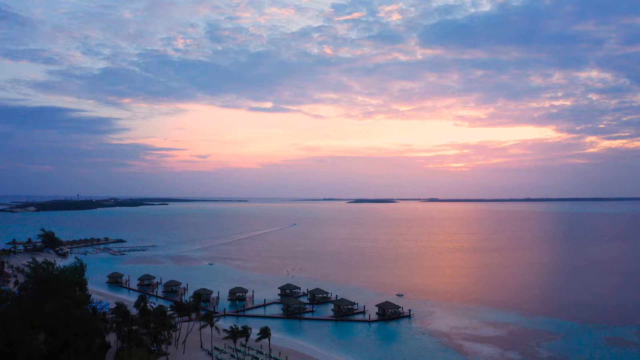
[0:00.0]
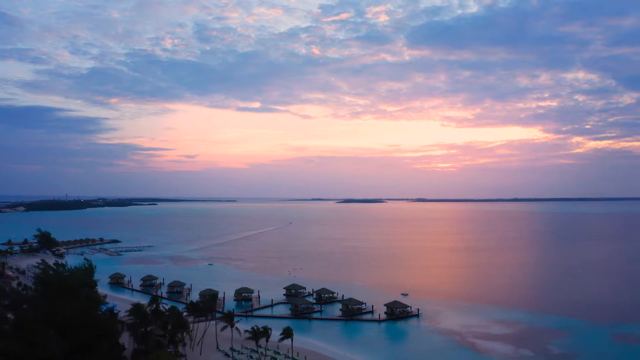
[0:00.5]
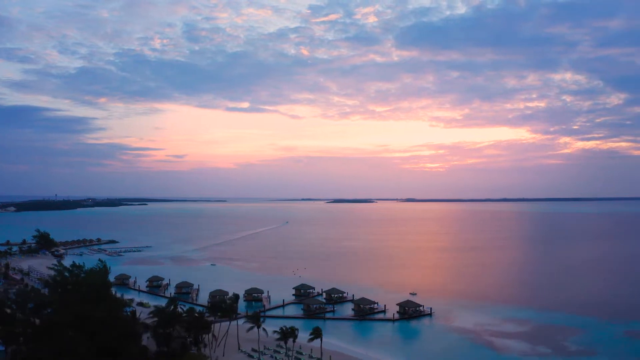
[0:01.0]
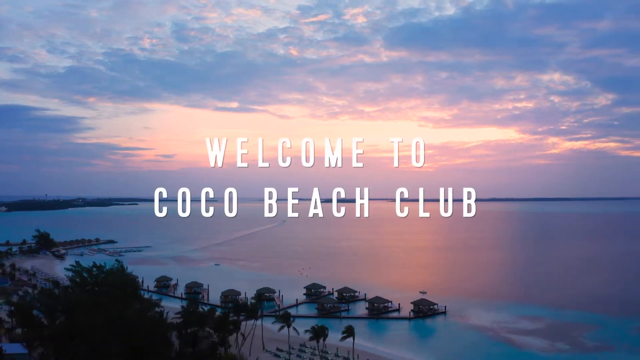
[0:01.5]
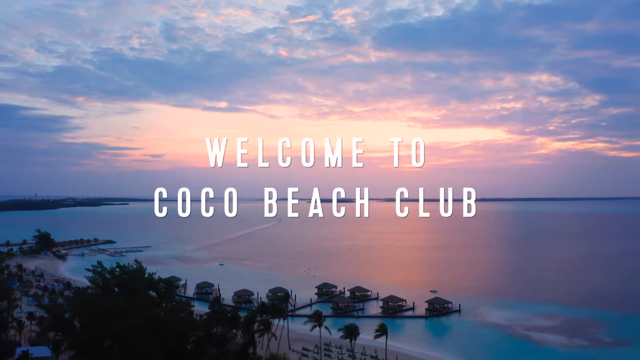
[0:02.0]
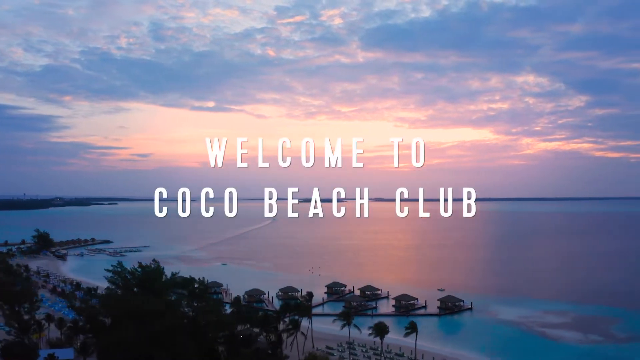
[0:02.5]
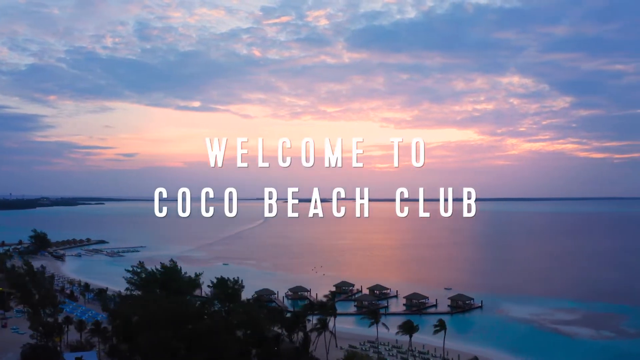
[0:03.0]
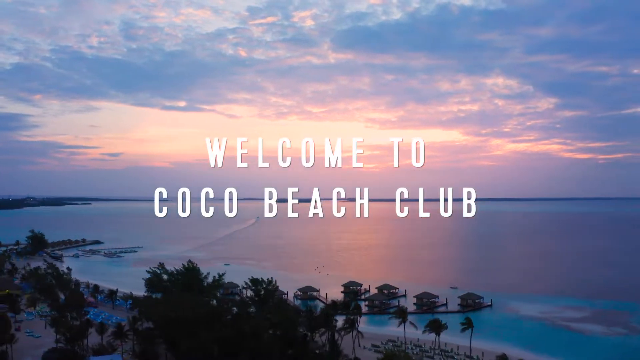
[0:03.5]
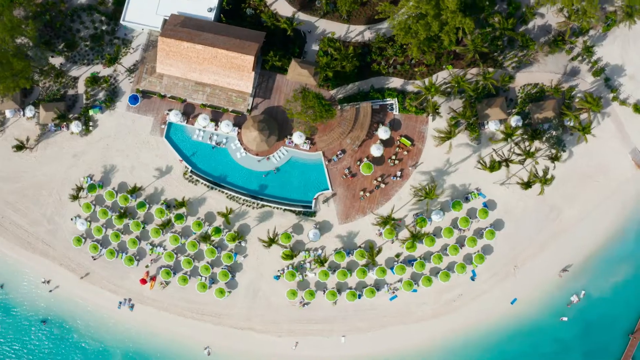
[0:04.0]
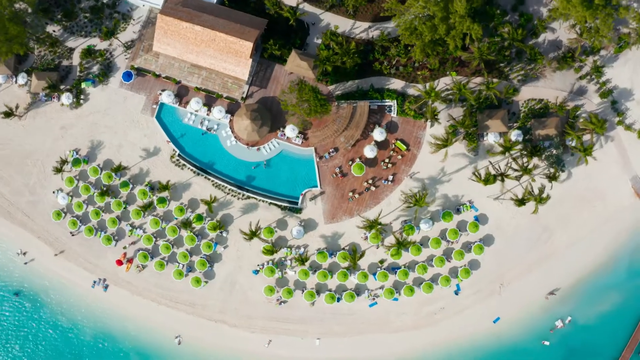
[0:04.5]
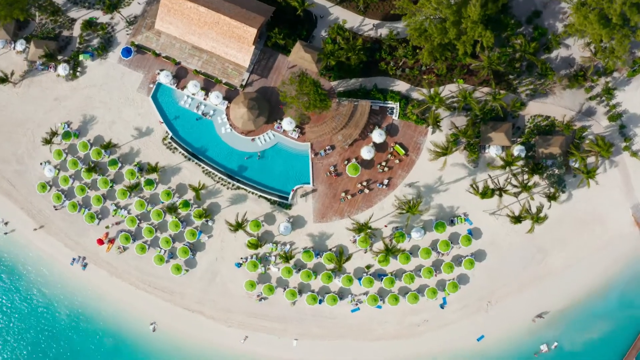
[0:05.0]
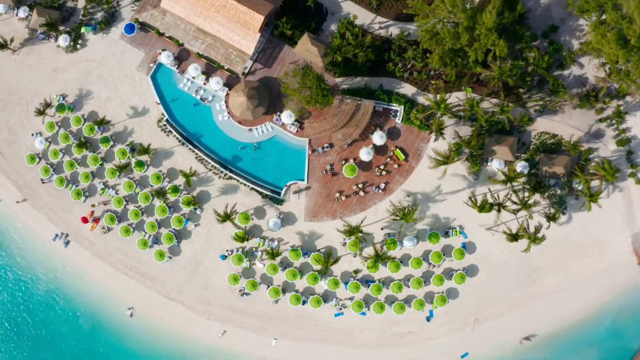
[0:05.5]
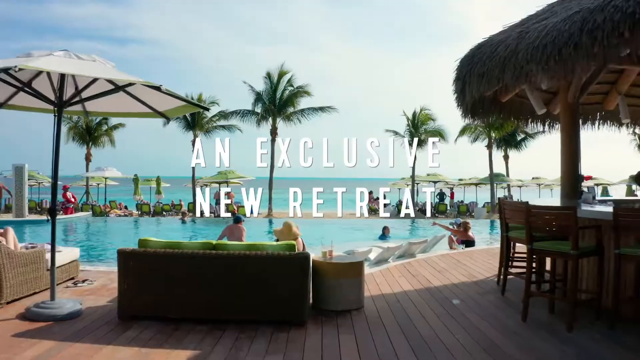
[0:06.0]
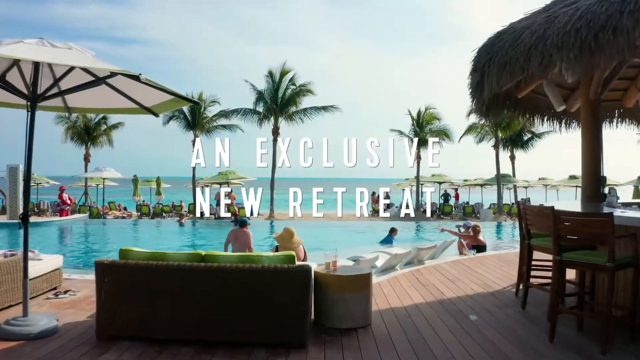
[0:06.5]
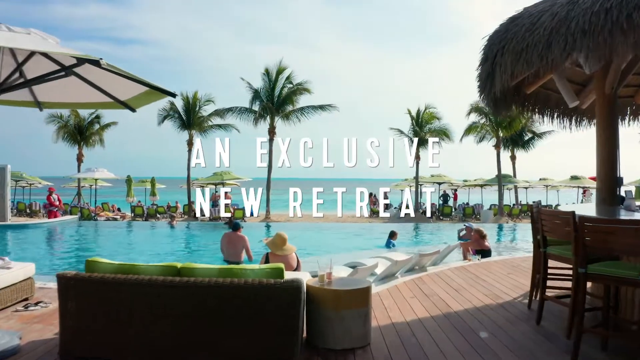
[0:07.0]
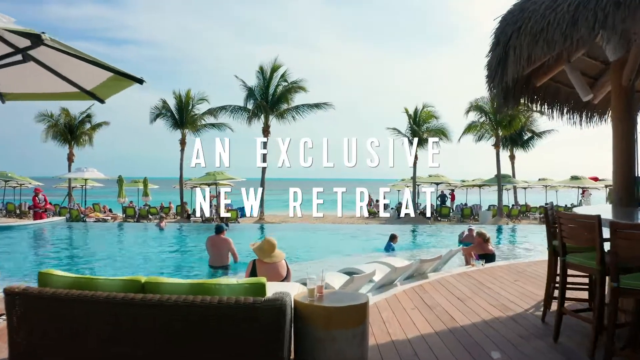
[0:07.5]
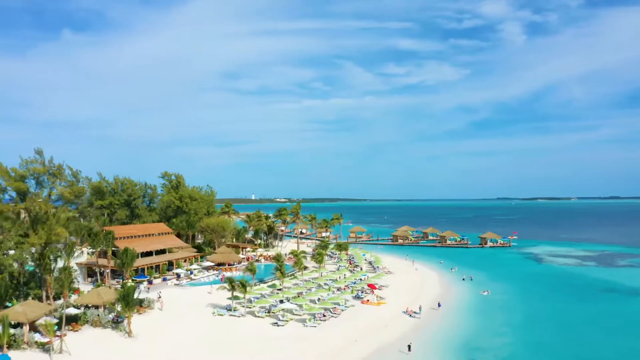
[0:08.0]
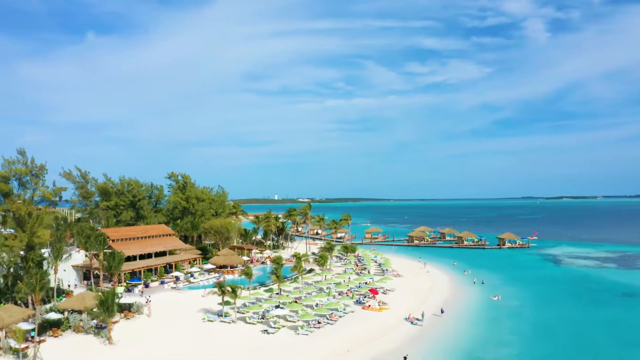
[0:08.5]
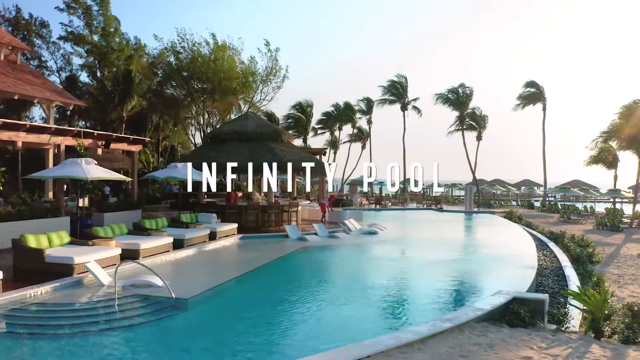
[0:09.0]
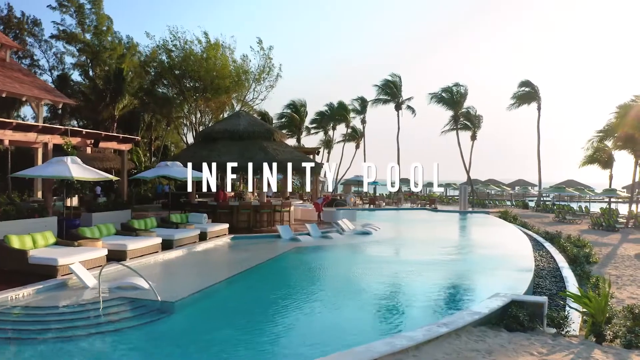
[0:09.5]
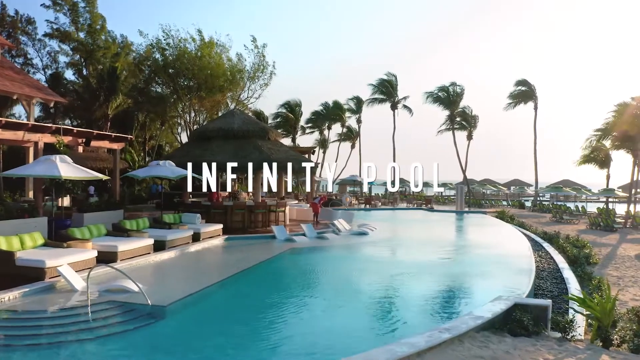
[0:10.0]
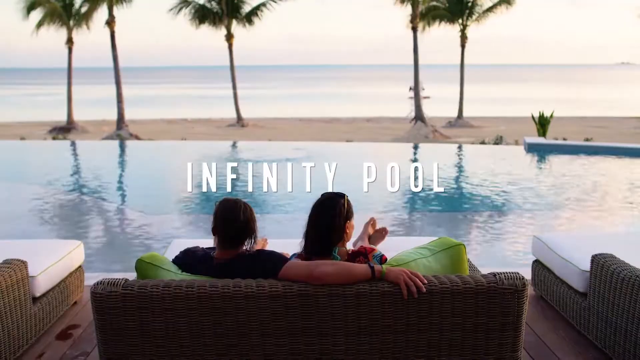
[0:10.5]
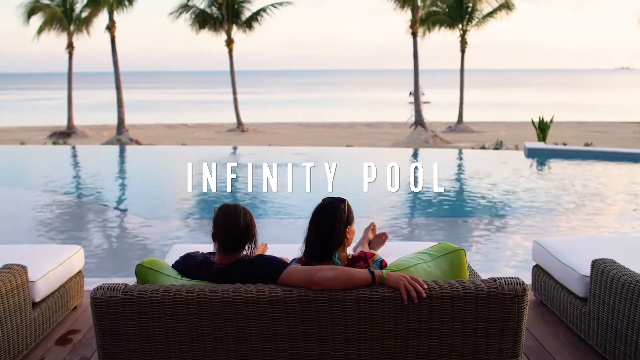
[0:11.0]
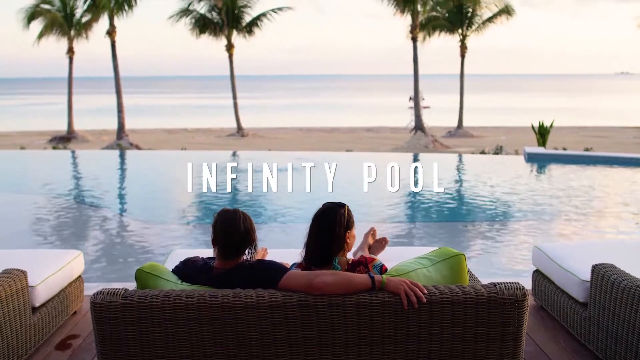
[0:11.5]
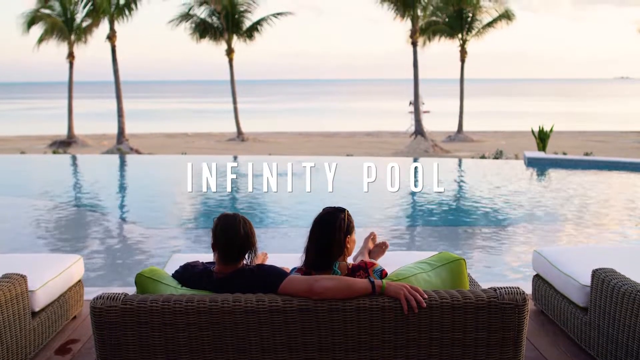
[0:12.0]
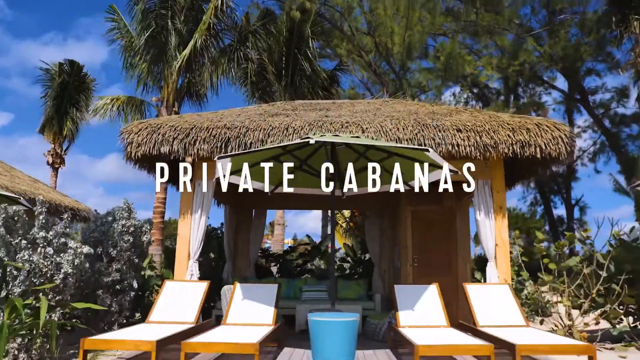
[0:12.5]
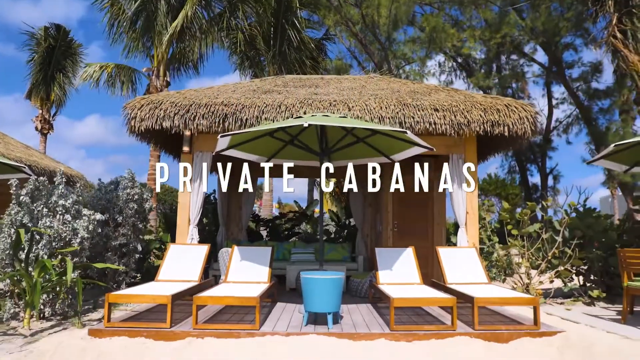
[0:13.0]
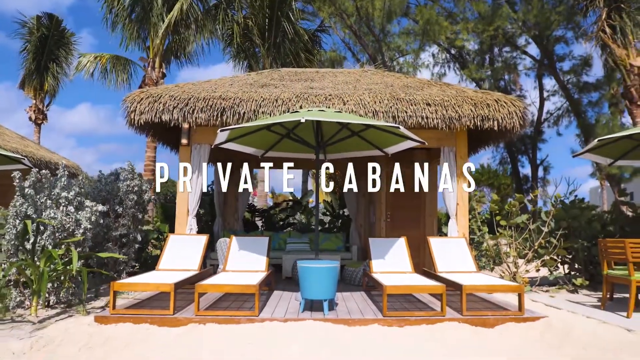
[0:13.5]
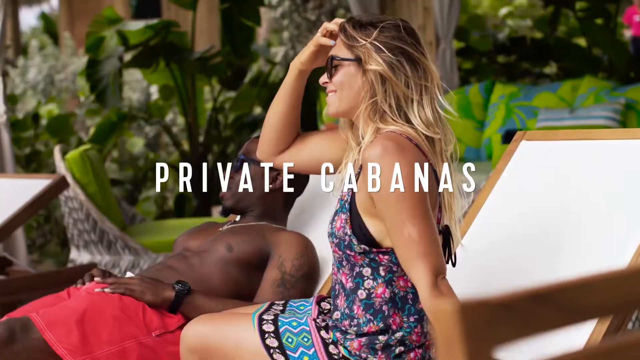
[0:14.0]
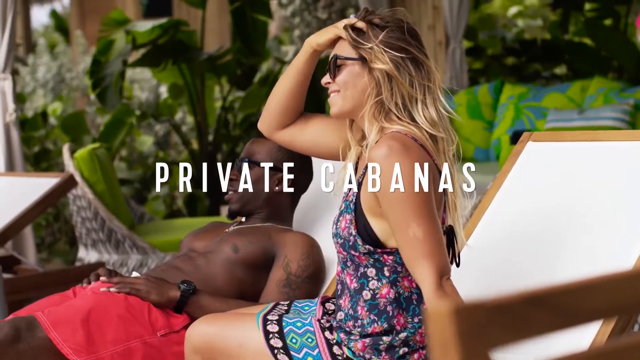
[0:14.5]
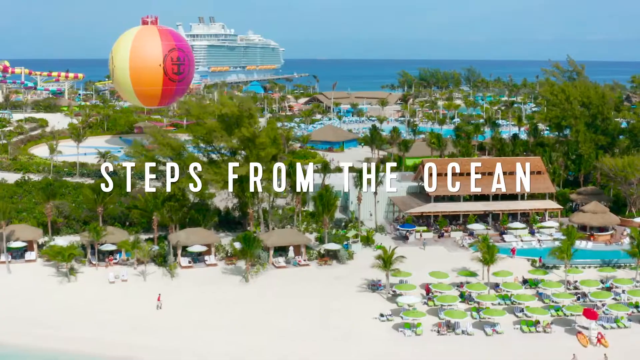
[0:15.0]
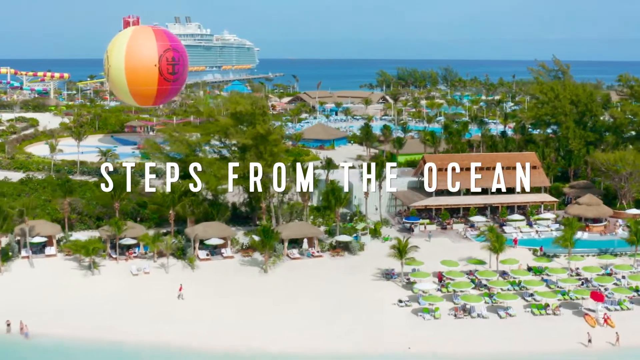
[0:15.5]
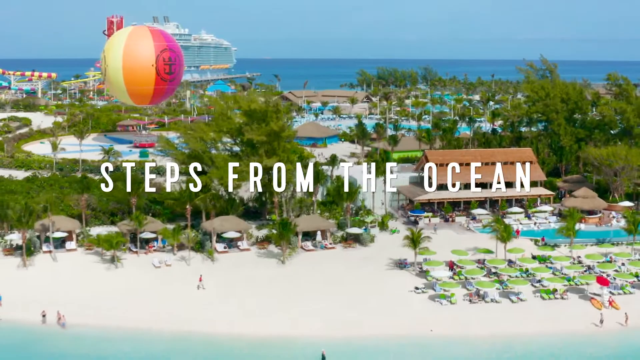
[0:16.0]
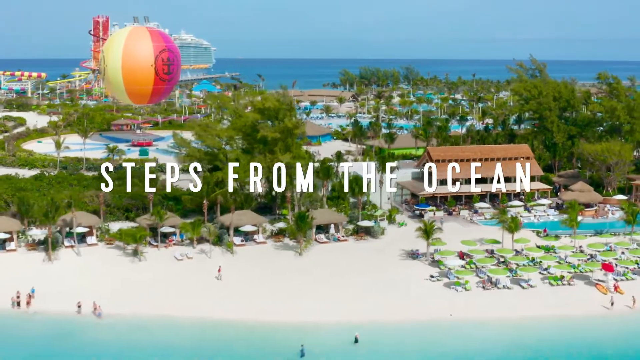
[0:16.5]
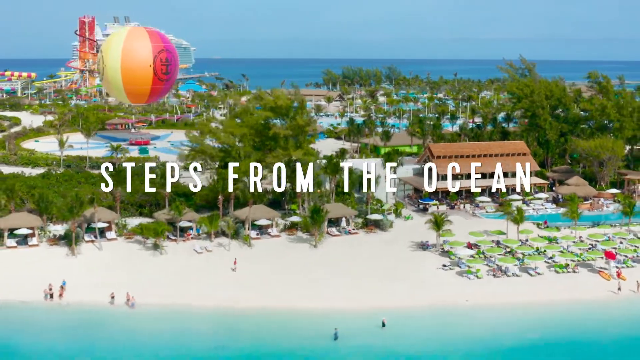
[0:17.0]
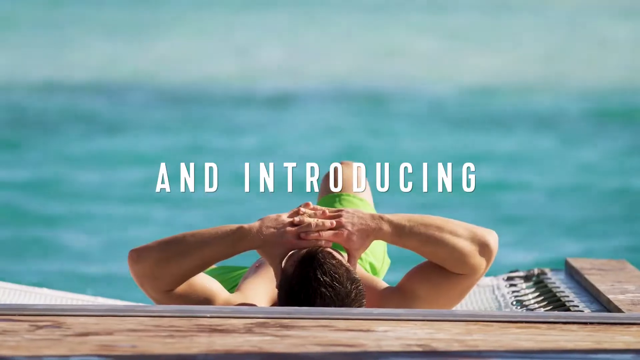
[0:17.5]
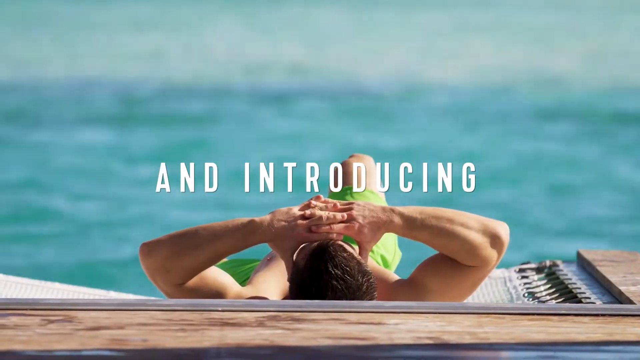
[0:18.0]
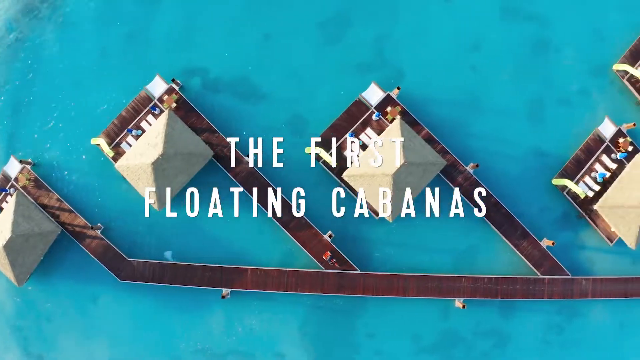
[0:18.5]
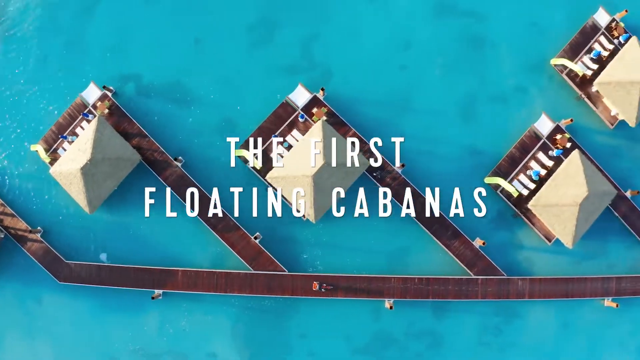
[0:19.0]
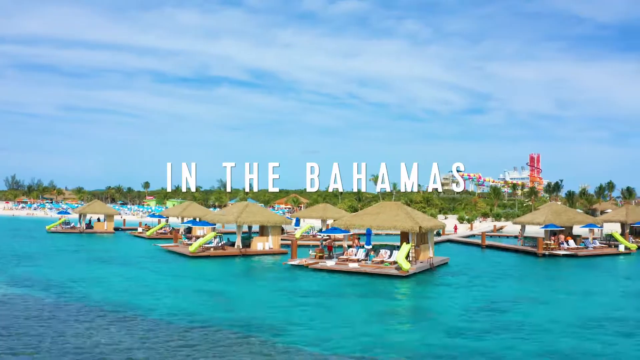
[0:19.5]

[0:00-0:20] The video opens looking out on a sunset over a tropical beach. White sandy beach fills the bottom of the screen, the sea is in the middle, and the sunset is in the back. Many clouds in the sky are illuminated by the red-pink-orange colour of the sunset, which reflects onto the sea. Close to the shore, a handful of beach cabanas stand against the coast. The camera pans slowly across, giving a clearer view of the horizon, and the text "Welcome to Cocoa Beach Club" appears in the center in a white font. The view switches to a bird's-eye view of the beach club, with the blue sea visible at the bottom and in the corners. A wide shot shows the sandy white beach with green beach parasols, and in the background at the top there are many palm trees and greenery. Right in the center of the image is a beach resort with an infinity pool and a circular-shaped bar, with a seating area to the right. The camera slowly turns clockwise, going down into the resort. The image changes to a view of the pool from behind a green rattan chair, which has a table next to it with two drinks on top. To the left is a Bali bed with a parasol, and to the right is a cocktail bar with a straw roof. Beyond is the infinity pool with five guests in it; the pool overlooks the sea, and the horizon is visible in the distance. The white text "An Exclusive New Retreat" appears. The camera moves in closer to the pool, then the image switches to an overhead view of the resort where the reception, the bar, the pool, the beach, and the sea in the background are clearly visible. Next comes a close-up of the infinity pool. To the left are four Balinese beds, two of them with parasols, with the bar behind them, and the pool is the focus of the image. The left-hand side of the pool has a white bottom with multiple sunbathing chairs inside the pool, followed by a blue-bottomed section that overlooks the sea. Next to this is the beach, with palm trees lined up along the side. White text appears that says "infinity pool". The image then shows a couple from behind as they overlook the sunset at the infinity pool. They are laying on a Bali bed with a rattan back, a white base, and a green cushion, and the man has his arm over the woman. The video then switches to the private cabanas: gazebo-type structures with four sticks holding them up and a straw roof overhead. In the front are four sun loungers, in the middle is a blue cool box, and behind the cool box is a sun parasol. Behind these are bushes and palm trees that make the cabanas more private. White text appears that says "private cabanas". A couple is then seen using one of these private cabanas.